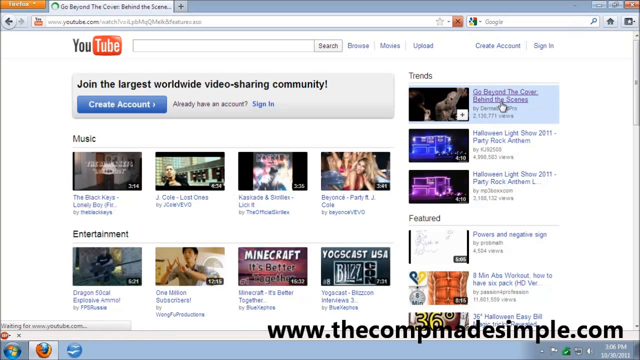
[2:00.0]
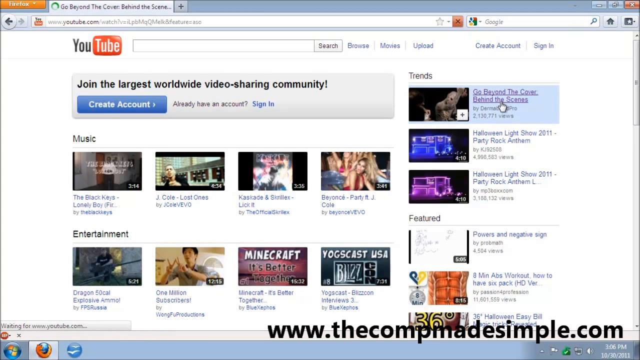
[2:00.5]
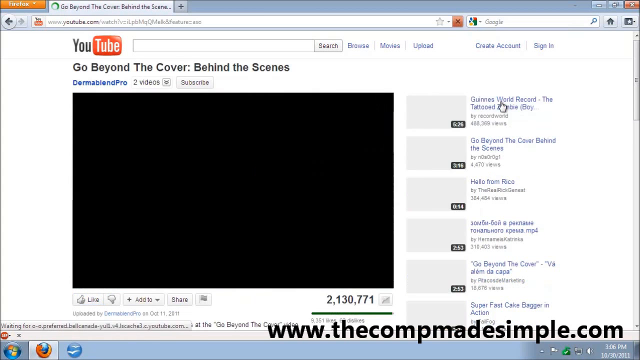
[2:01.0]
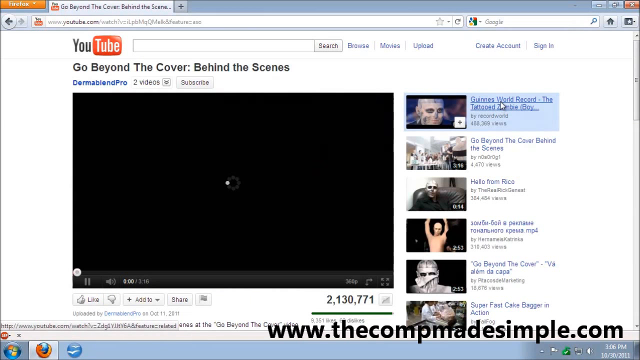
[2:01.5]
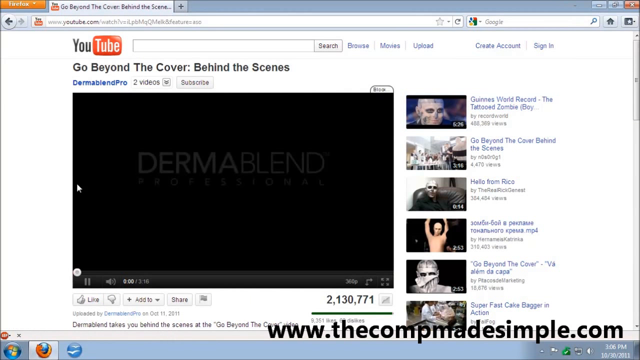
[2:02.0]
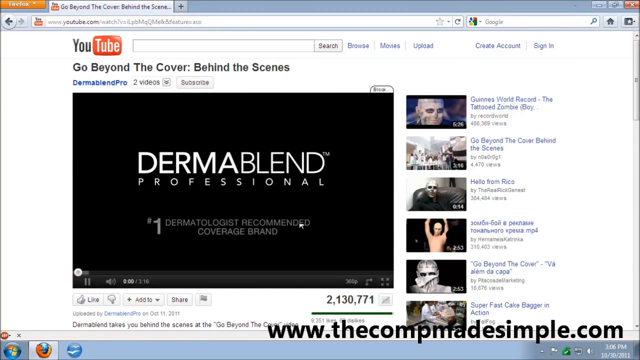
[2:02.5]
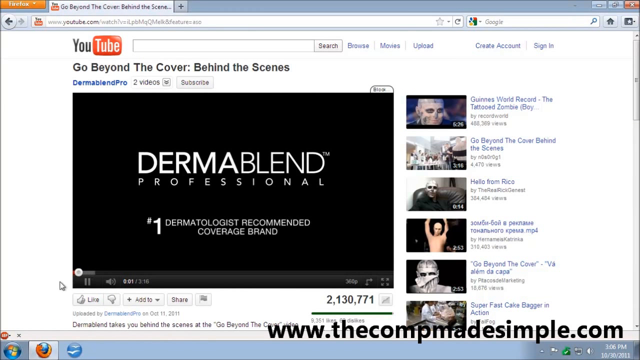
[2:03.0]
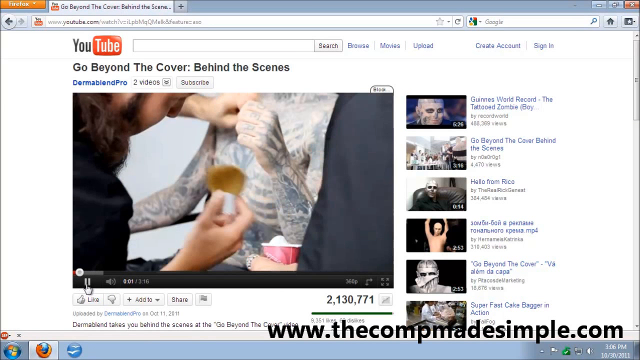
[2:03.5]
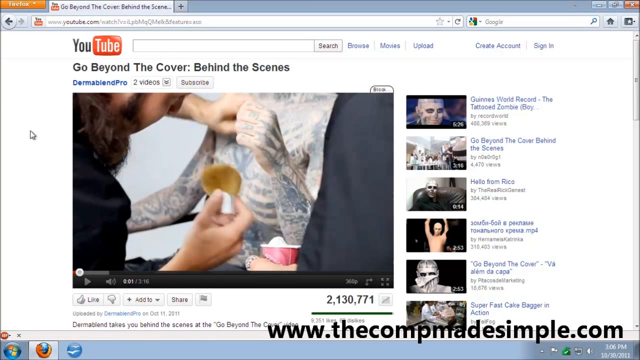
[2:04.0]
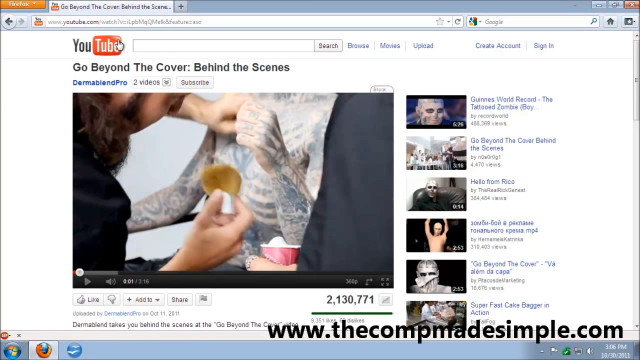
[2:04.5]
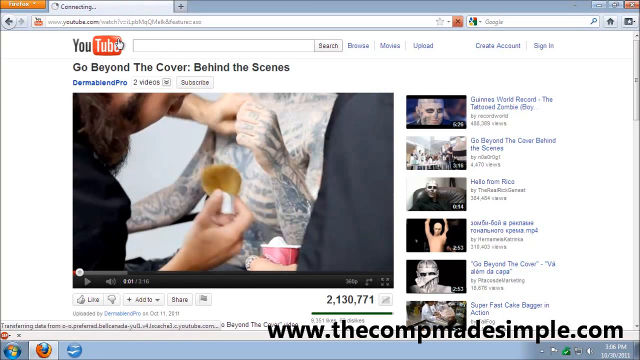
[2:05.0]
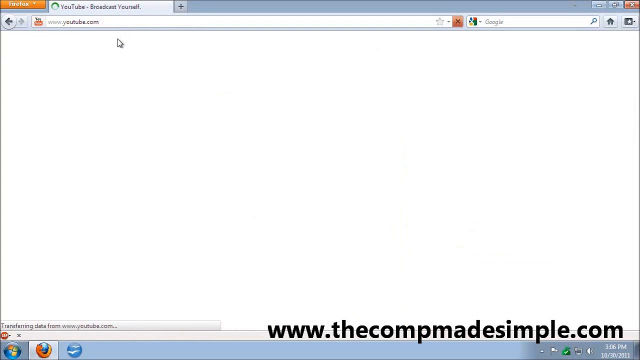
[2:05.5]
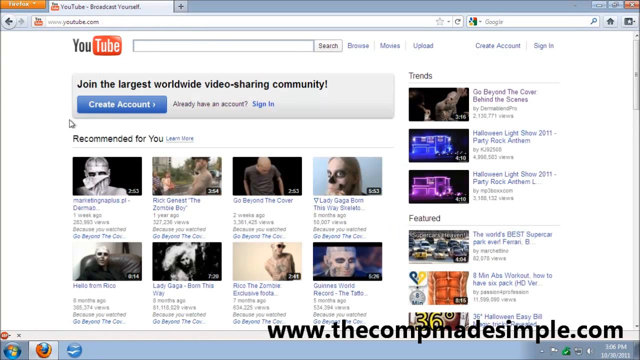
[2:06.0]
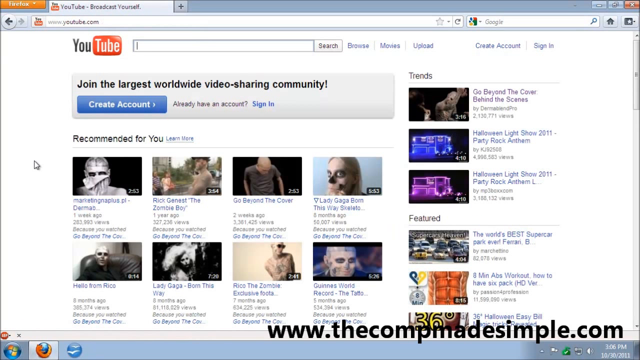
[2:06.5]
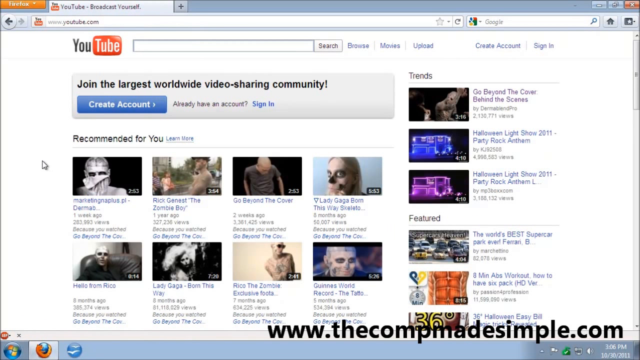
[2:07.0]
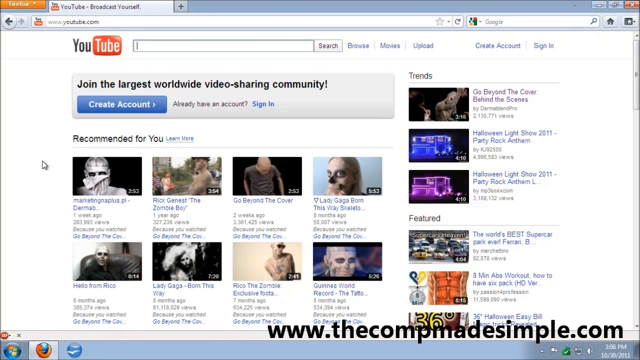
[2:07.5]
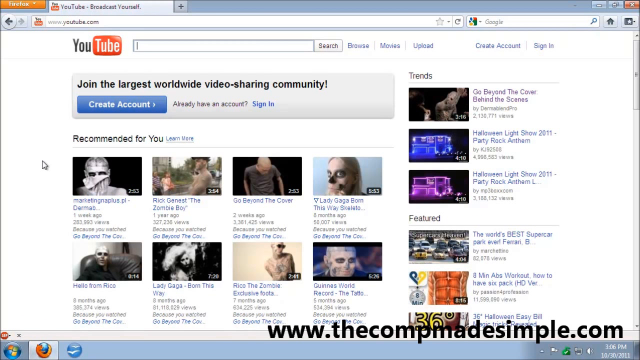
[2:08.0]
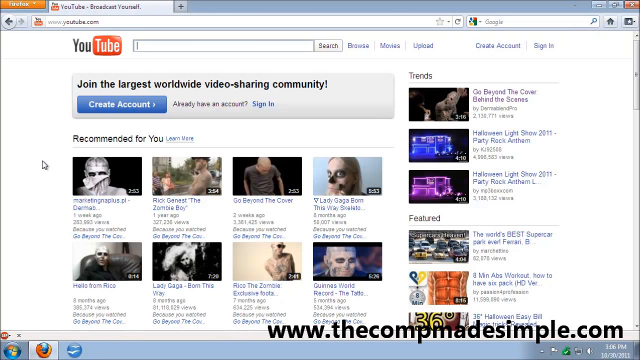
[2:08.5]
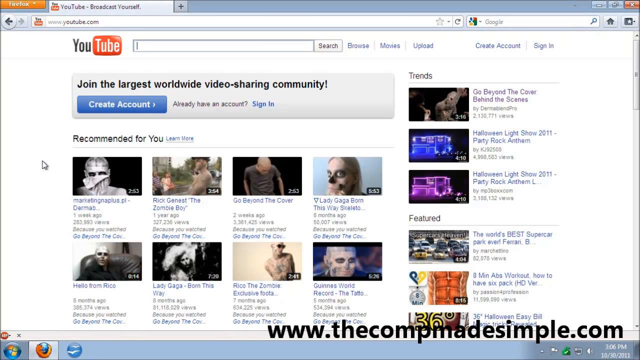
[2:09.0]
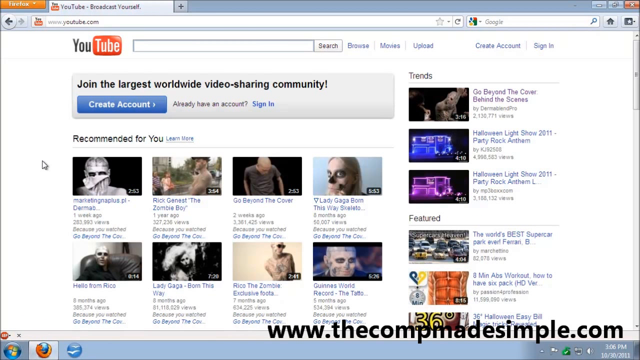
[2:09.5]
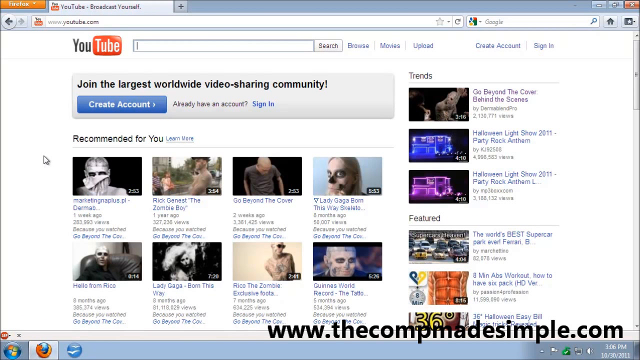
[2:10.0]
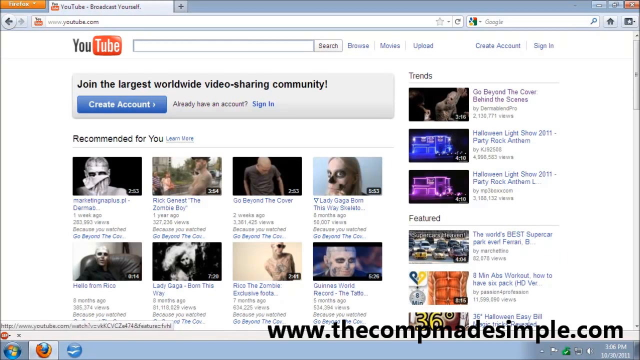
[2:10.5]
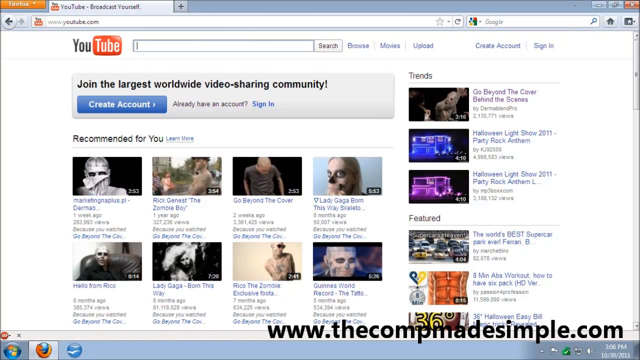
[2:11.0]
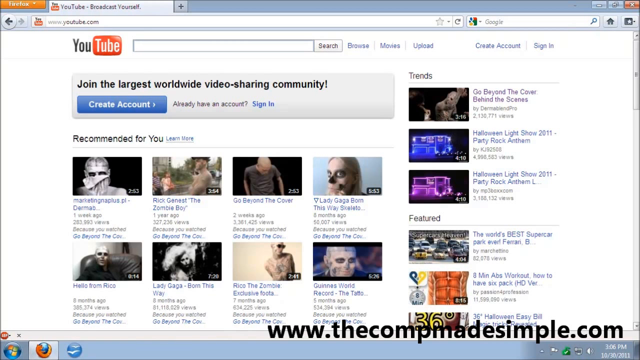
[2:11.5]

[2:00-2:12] On the YouTube.com homepage, the mouse pointer rests on the first video under the trends section in the upper right of the page, titled "Go Beyond the Cover Behind the Scenes". The user clicks the video, and it begins to load on the next page, but before it actually starts playing, the pointer moves up to the YouTube logo in the upper left of the screen, which is also the home button. Clicking it returns to the YouTube homepage, the same page where they started. The user is not signed in to YouTube.